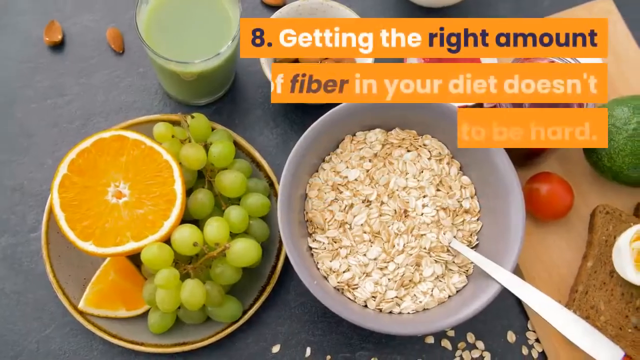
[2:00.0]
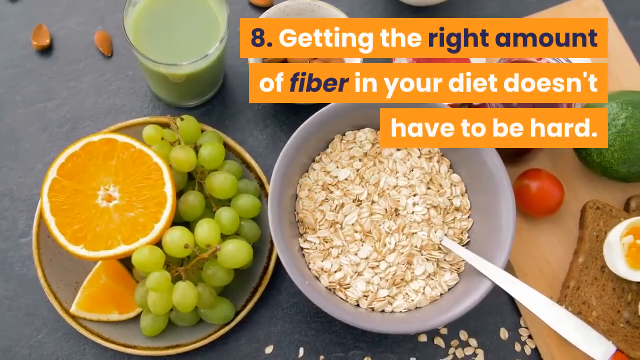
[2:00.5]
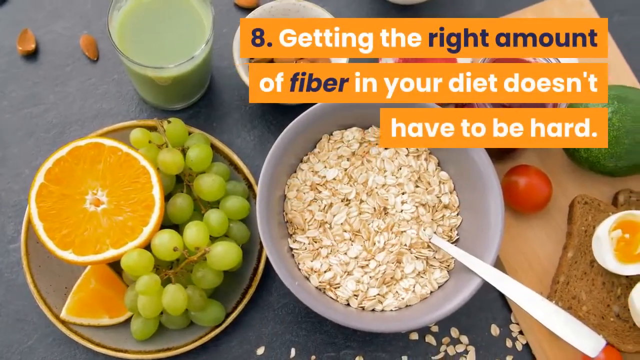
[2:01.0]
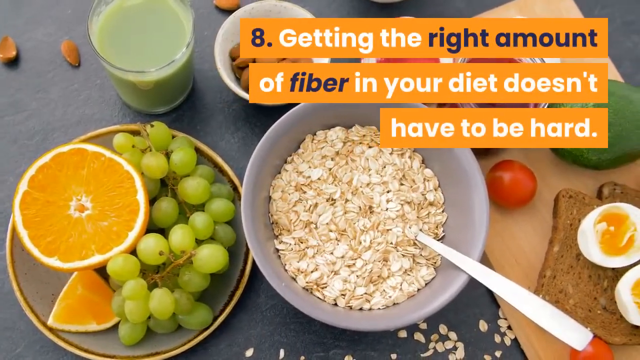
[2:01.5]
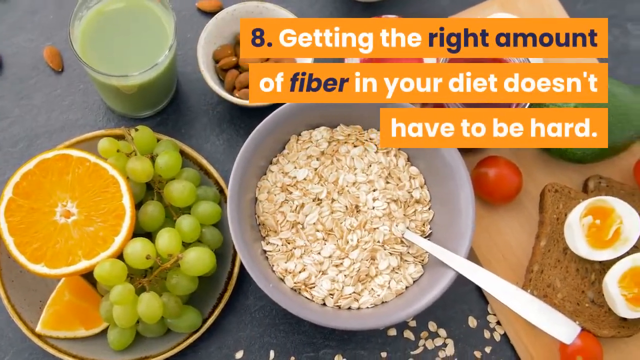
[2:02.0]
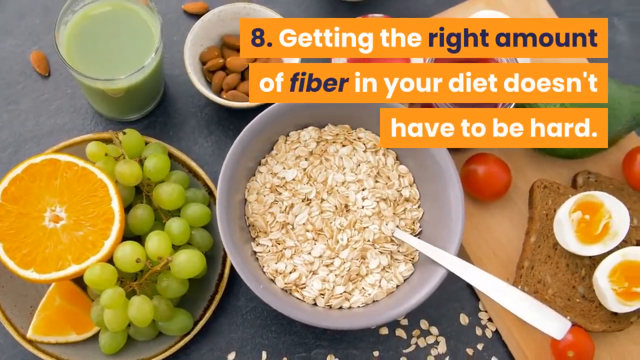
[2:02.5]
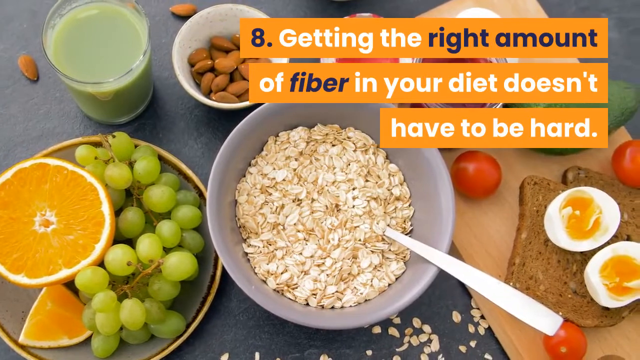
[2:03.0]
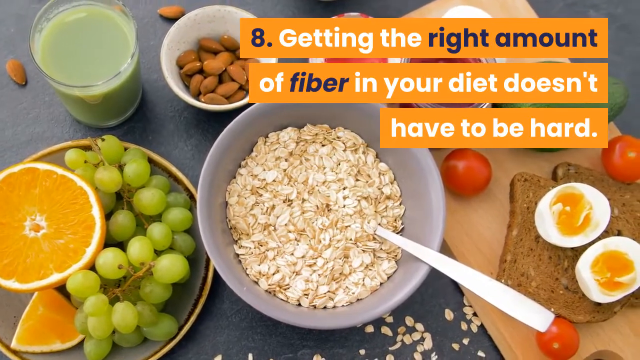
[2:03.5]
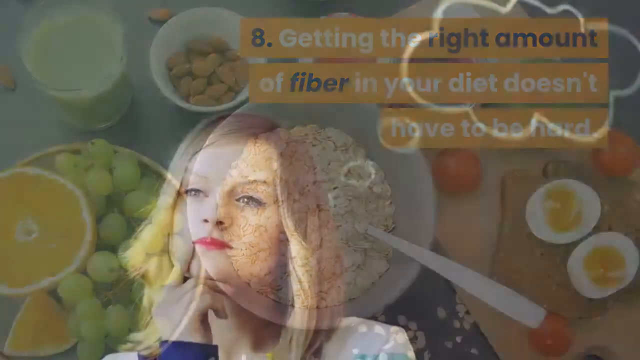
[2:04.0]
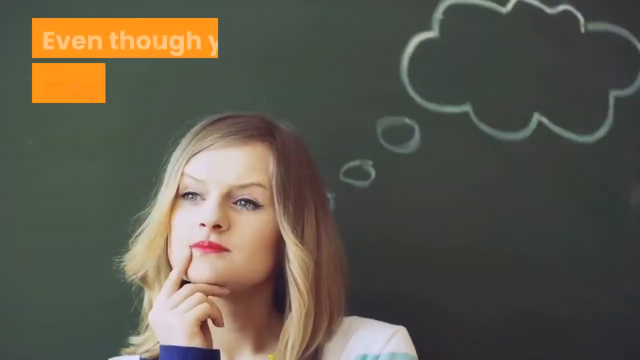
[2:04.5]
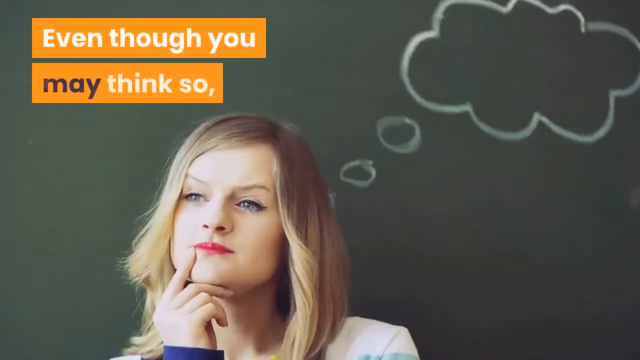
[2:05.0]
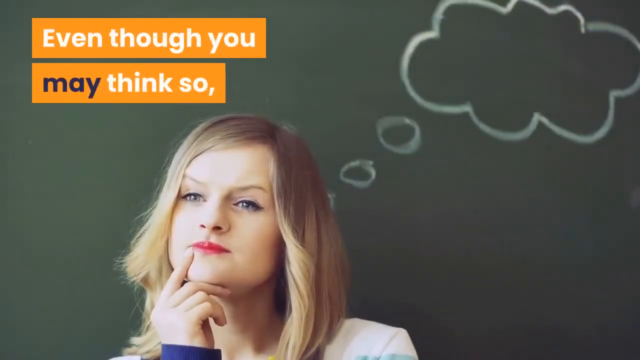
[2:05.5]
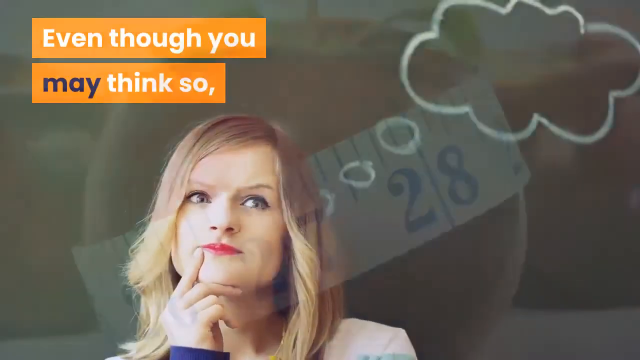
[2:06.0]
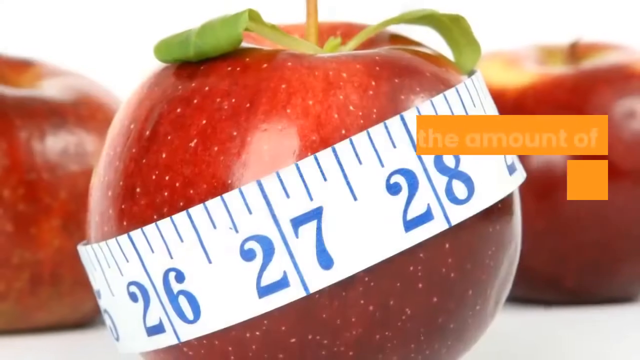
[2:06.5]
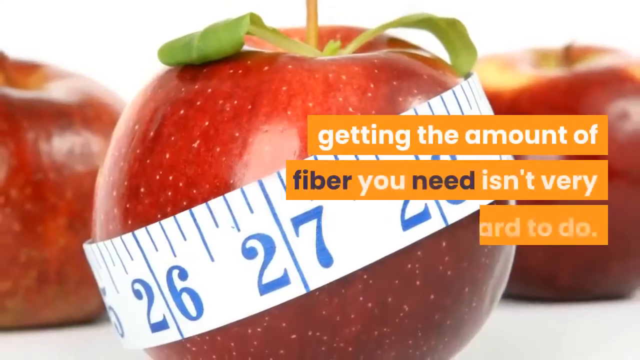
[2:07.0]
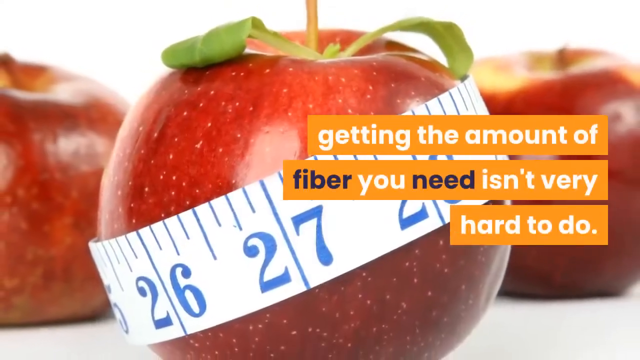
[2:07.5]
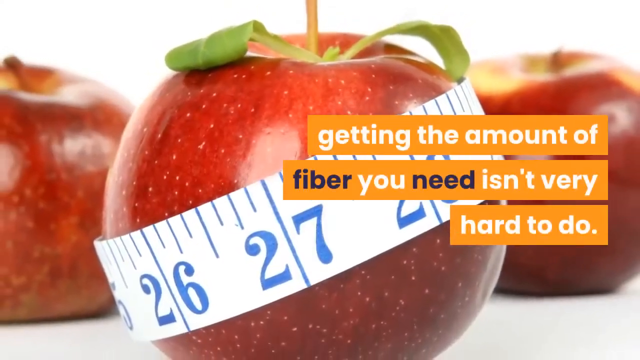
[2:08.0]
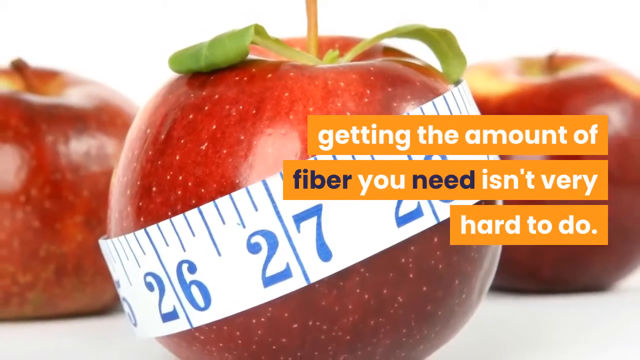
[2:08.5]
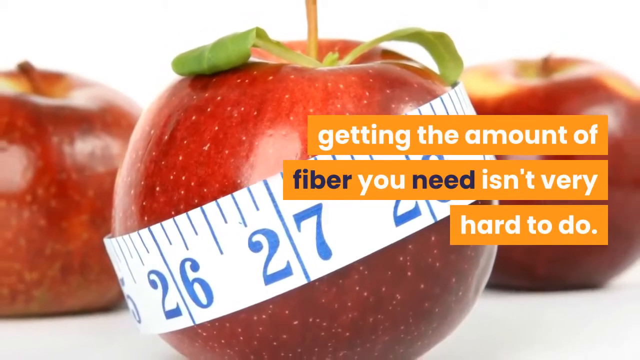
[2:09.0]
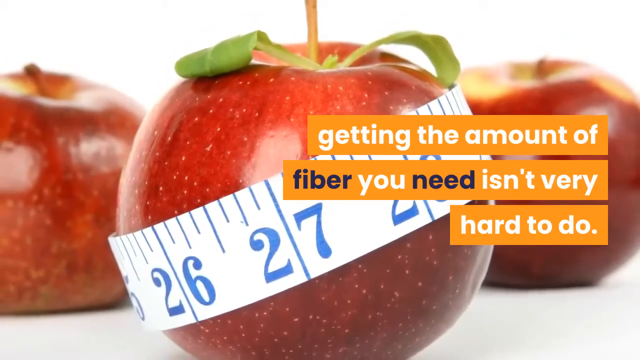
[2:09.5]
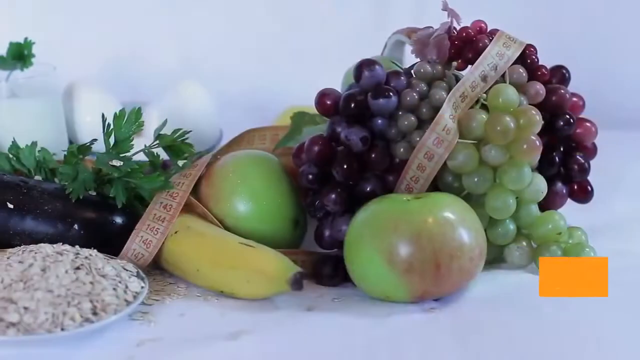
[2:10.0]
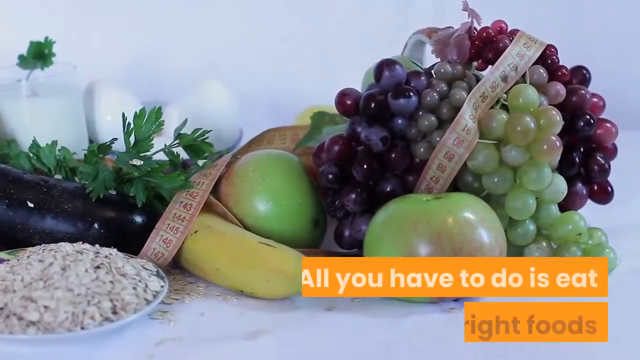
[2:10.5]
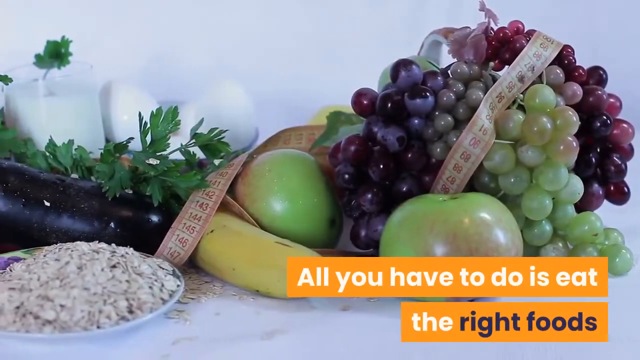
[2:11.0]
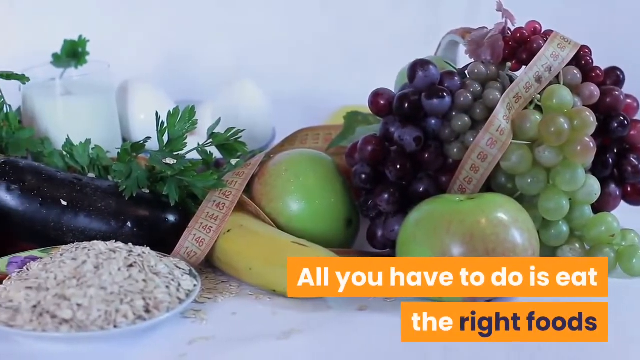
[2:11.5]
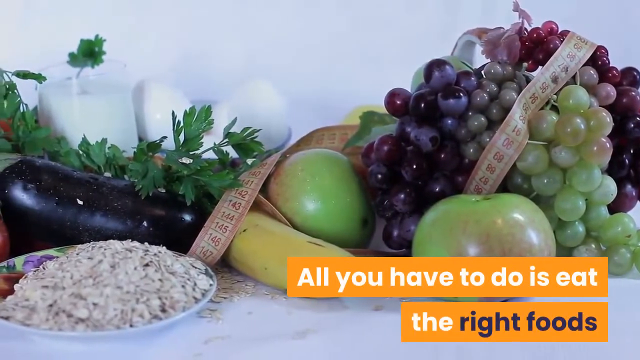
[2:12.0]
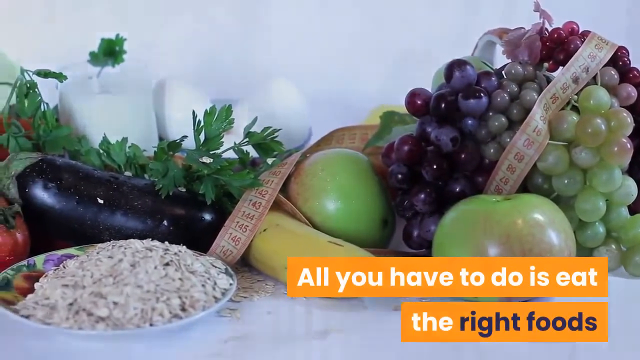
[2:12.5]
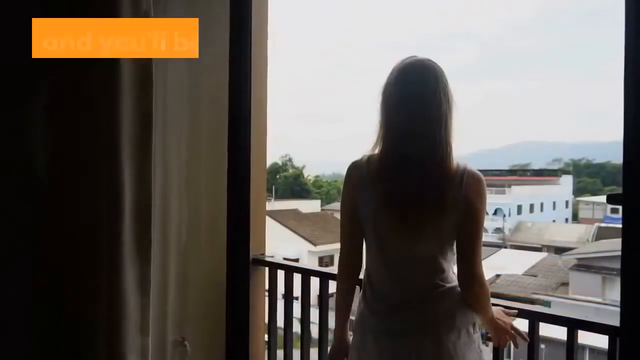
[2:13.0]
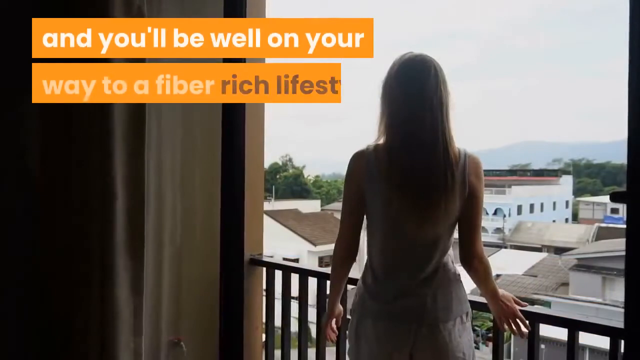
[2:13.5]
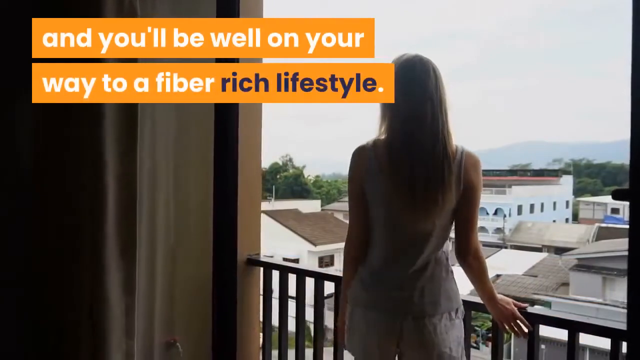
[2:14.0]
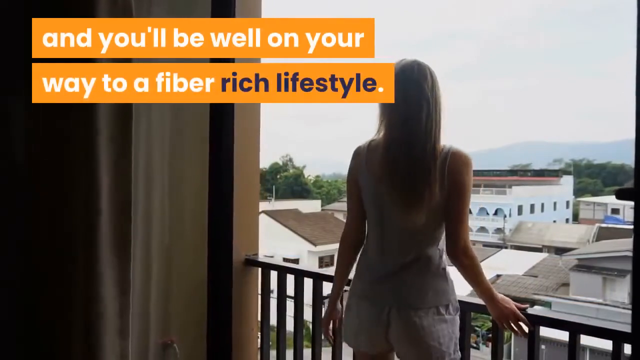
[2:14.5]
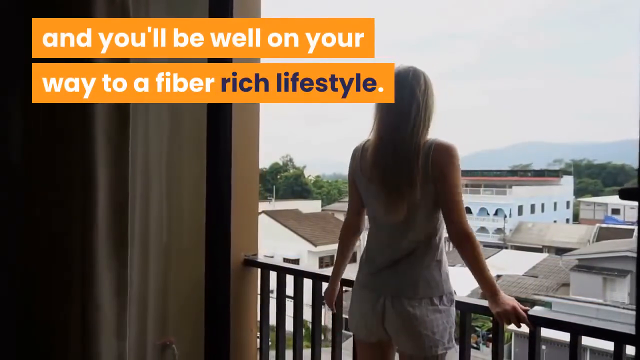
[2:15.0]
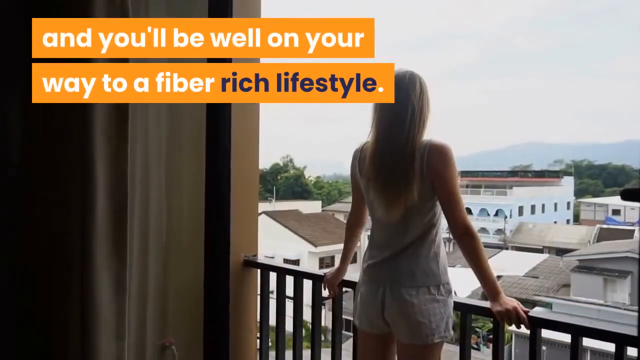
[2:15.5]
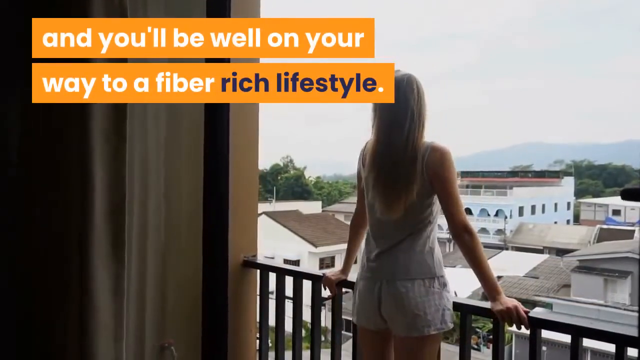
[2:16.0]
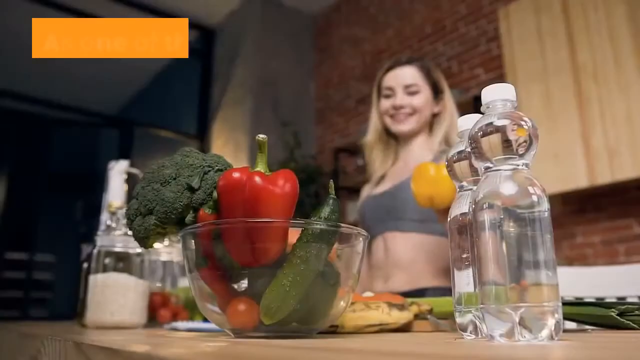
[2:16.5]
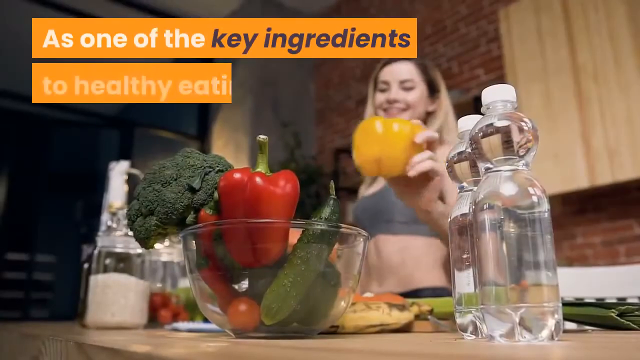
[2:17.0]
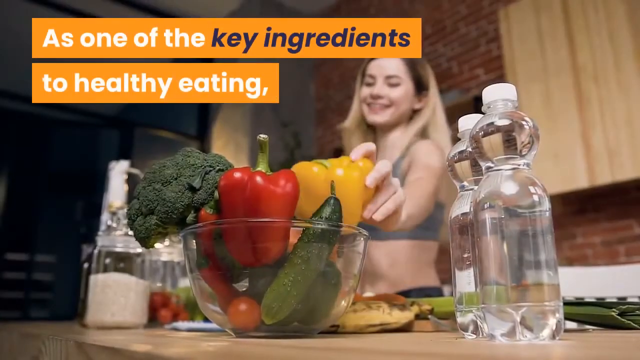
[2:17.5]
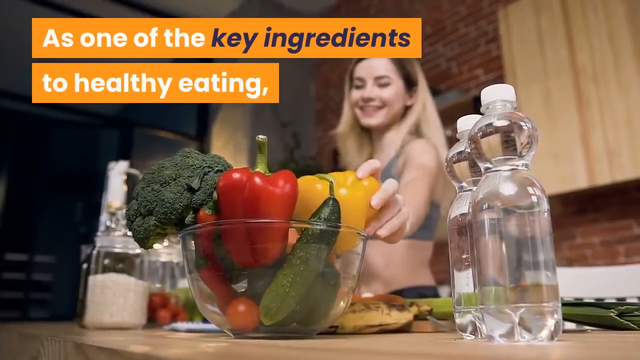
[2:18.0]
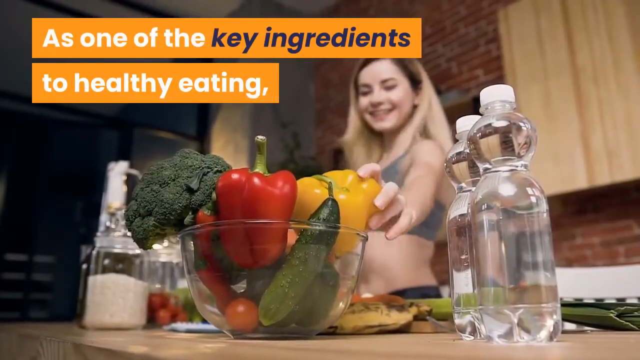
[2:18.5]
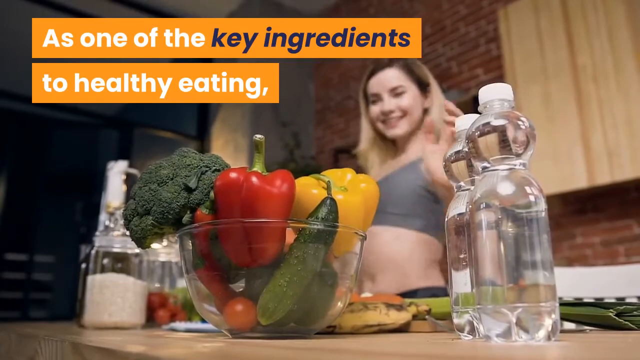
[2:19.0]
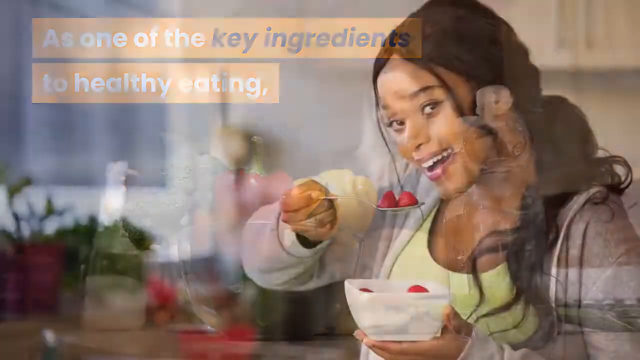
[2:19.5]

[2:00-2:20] Text reads "Getting the right amount of fiber in your diet doesn't have to be hard" while more kinds of various foods and vegetables are shown. The text continues: "Even though many people think so, getting the amount of fiber you need isn't very hard to do. All you have to do is eat the right kinds of foods and you'll be well on your way to a fiber-rich lifestyle. As one of the key ingredients to healthy eating," and cuts off after that.